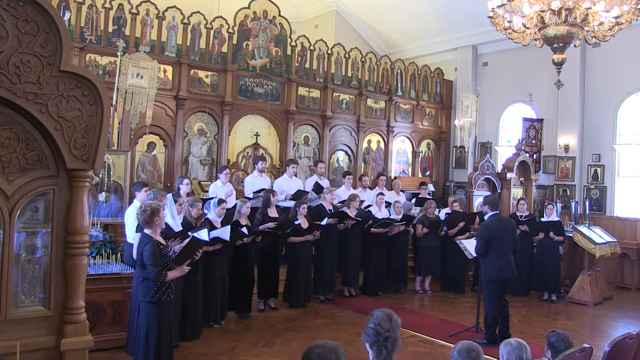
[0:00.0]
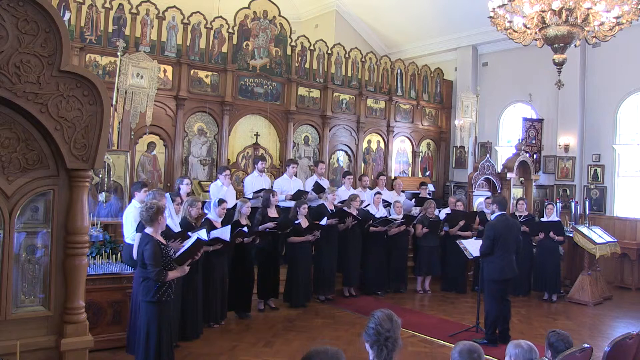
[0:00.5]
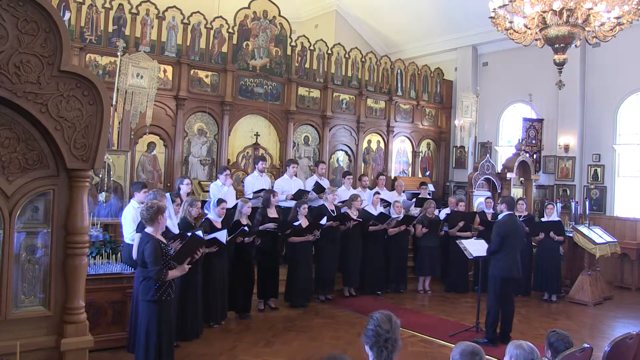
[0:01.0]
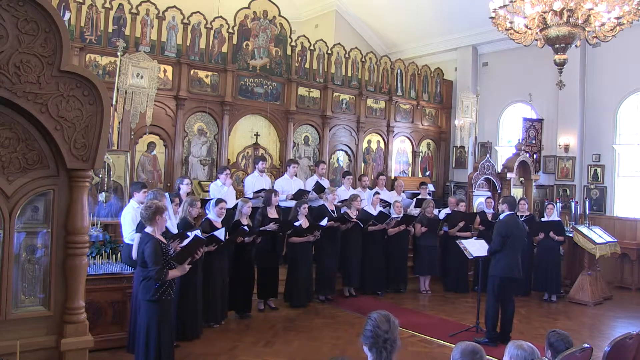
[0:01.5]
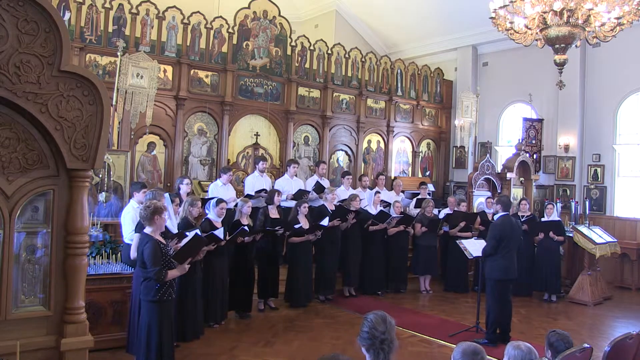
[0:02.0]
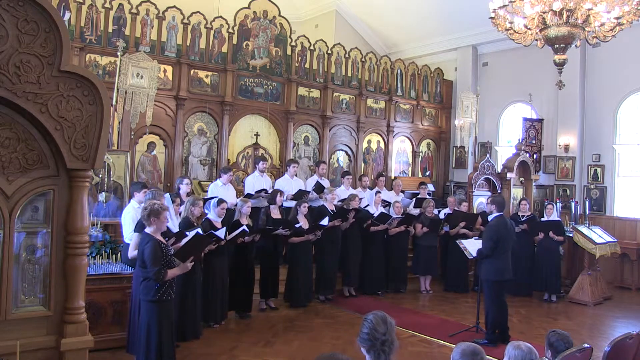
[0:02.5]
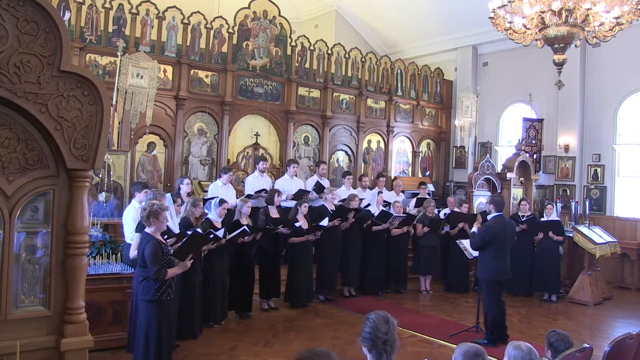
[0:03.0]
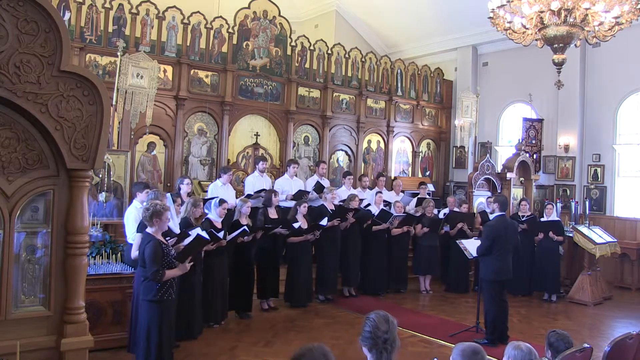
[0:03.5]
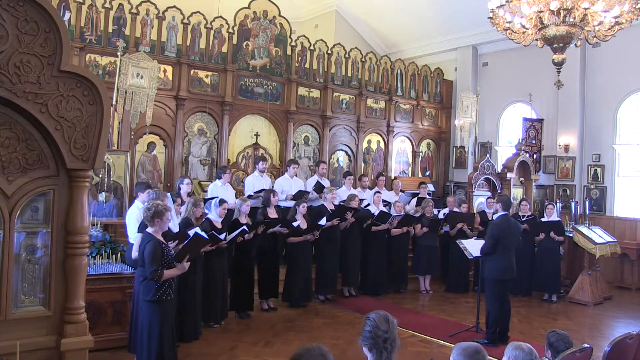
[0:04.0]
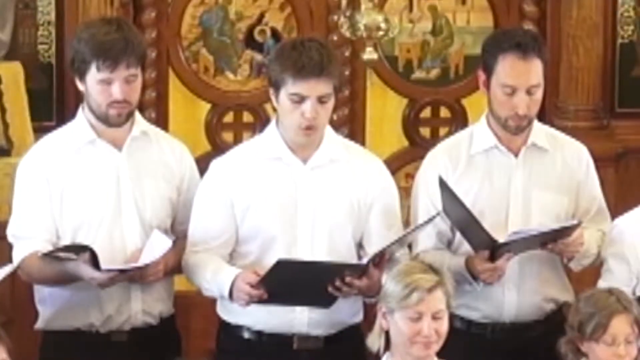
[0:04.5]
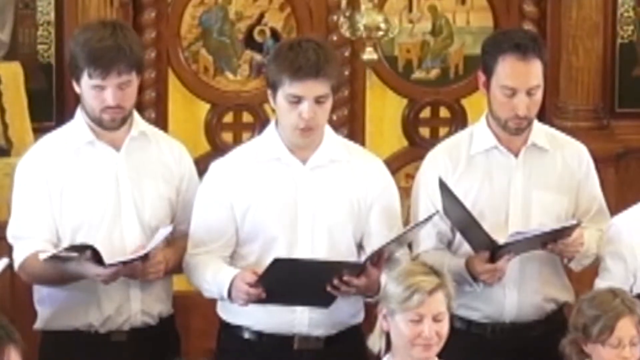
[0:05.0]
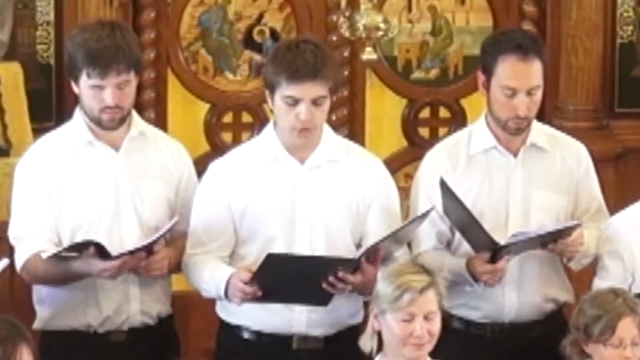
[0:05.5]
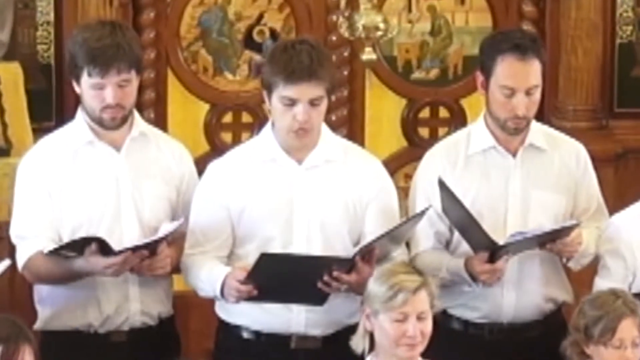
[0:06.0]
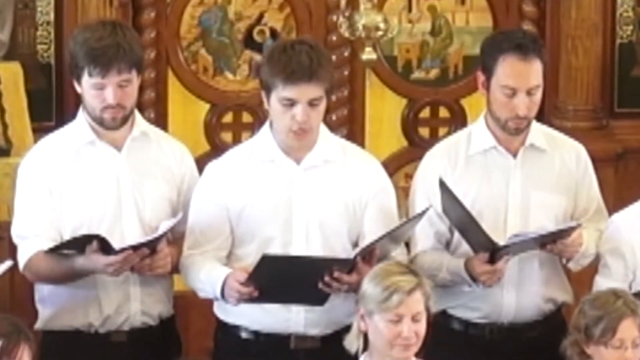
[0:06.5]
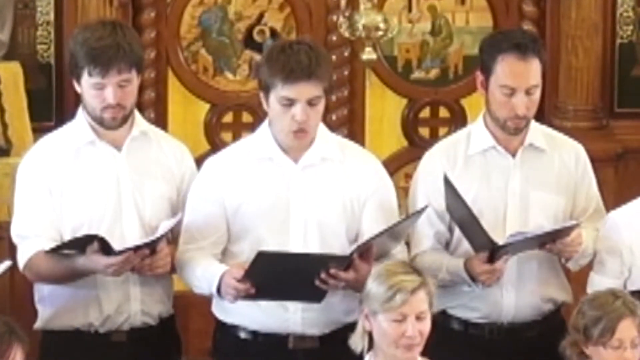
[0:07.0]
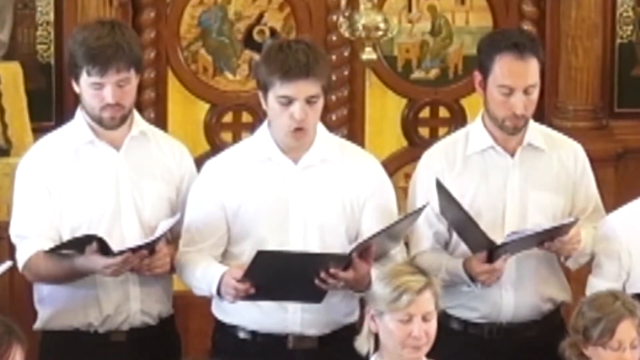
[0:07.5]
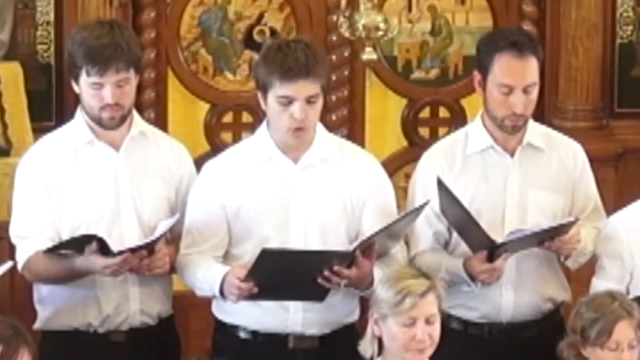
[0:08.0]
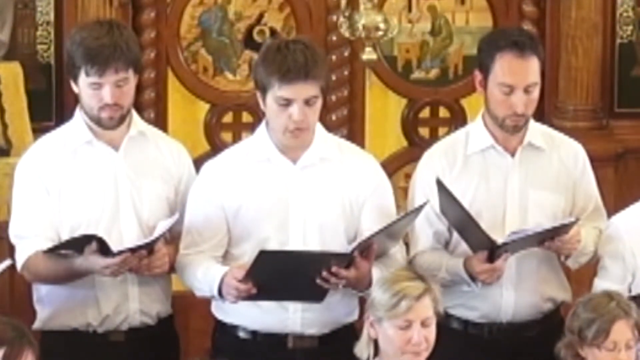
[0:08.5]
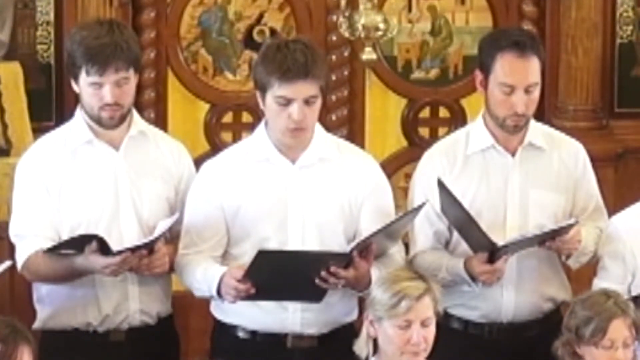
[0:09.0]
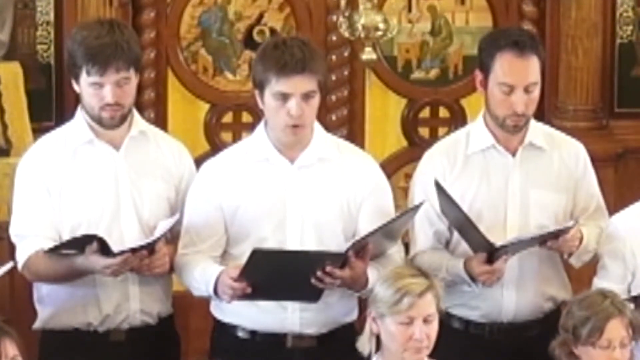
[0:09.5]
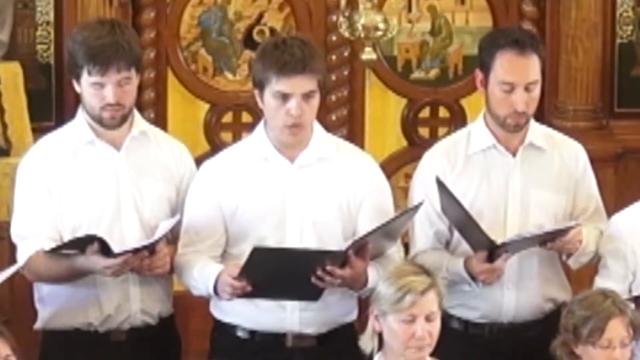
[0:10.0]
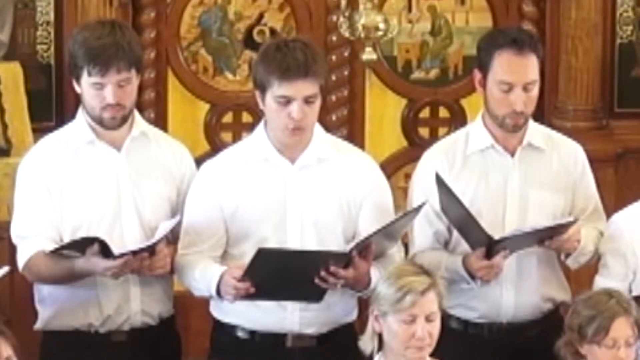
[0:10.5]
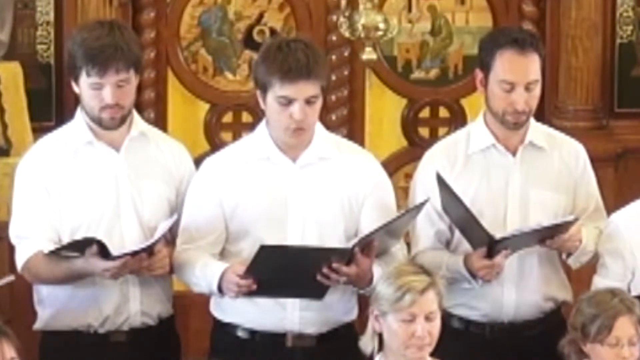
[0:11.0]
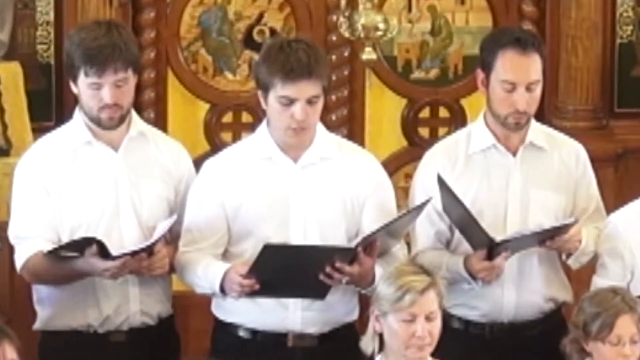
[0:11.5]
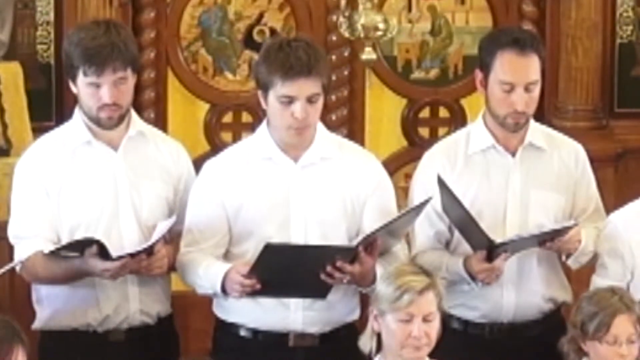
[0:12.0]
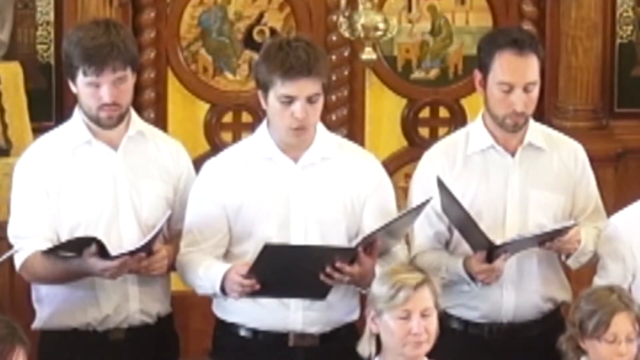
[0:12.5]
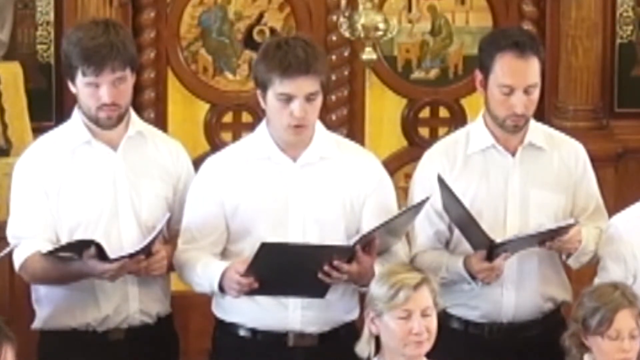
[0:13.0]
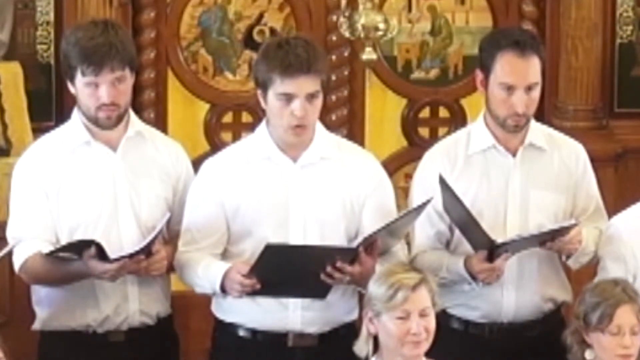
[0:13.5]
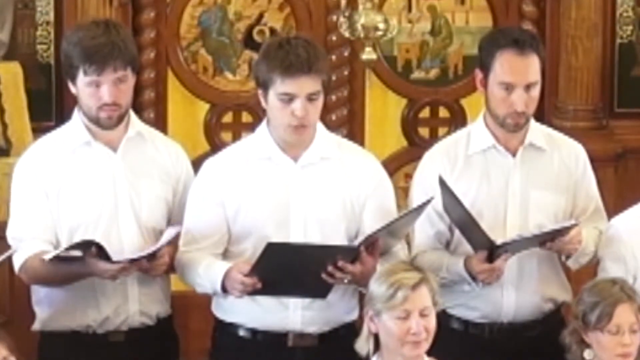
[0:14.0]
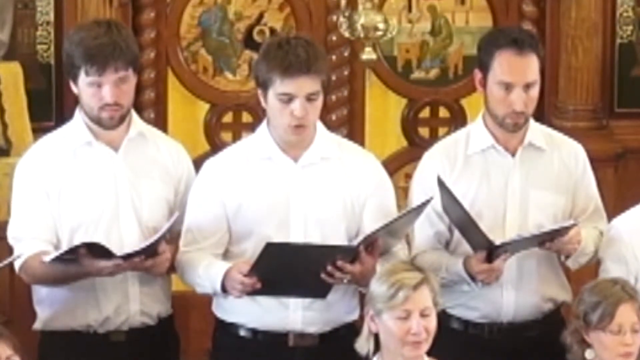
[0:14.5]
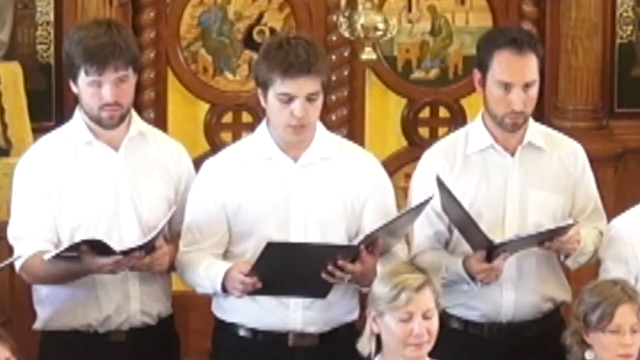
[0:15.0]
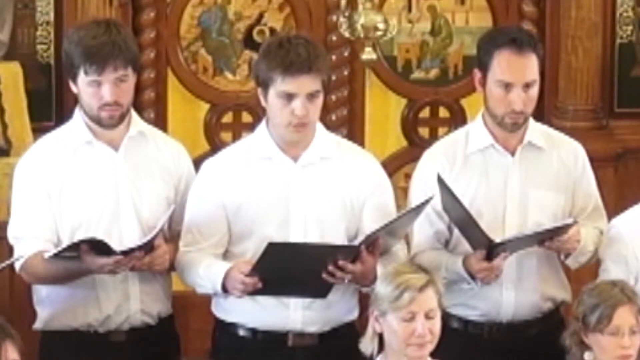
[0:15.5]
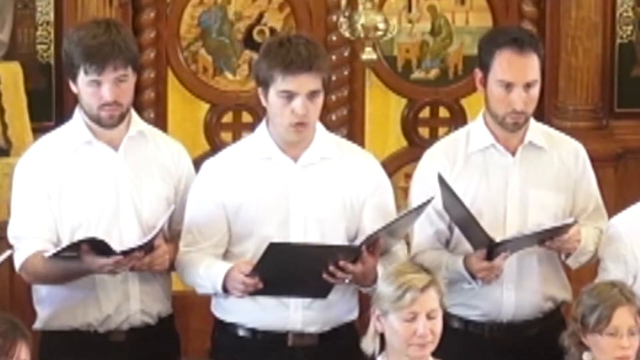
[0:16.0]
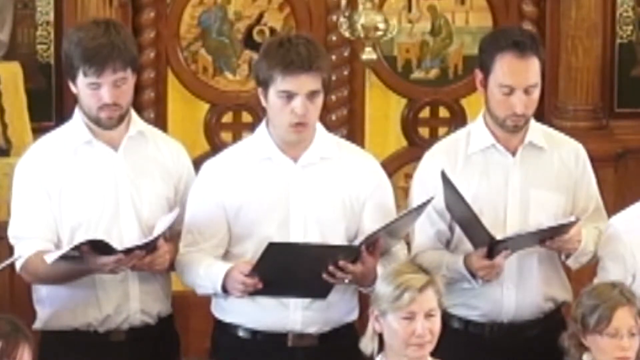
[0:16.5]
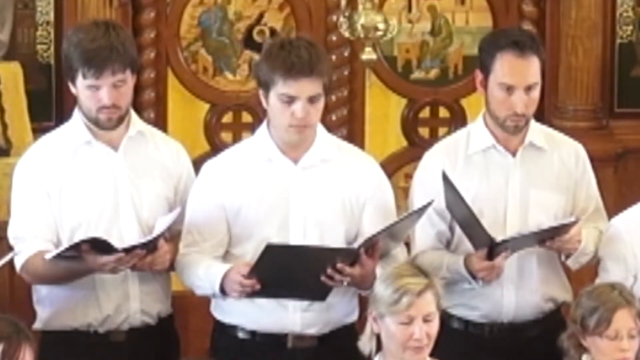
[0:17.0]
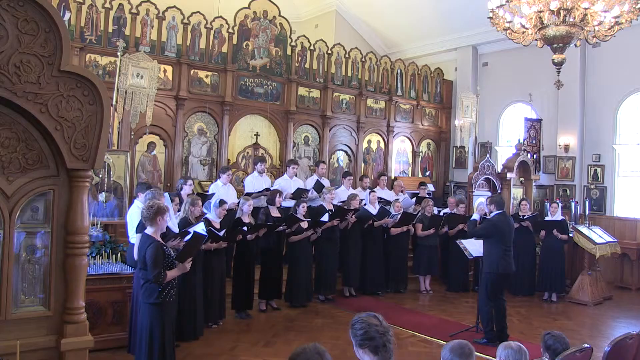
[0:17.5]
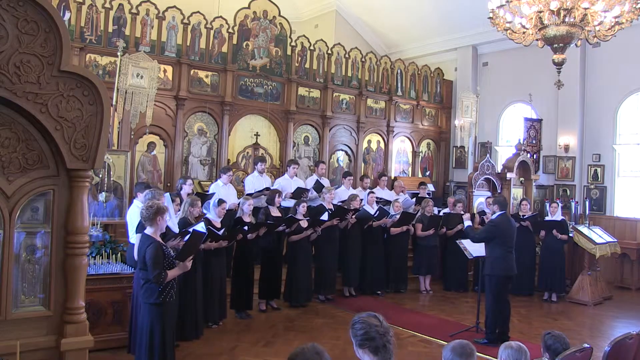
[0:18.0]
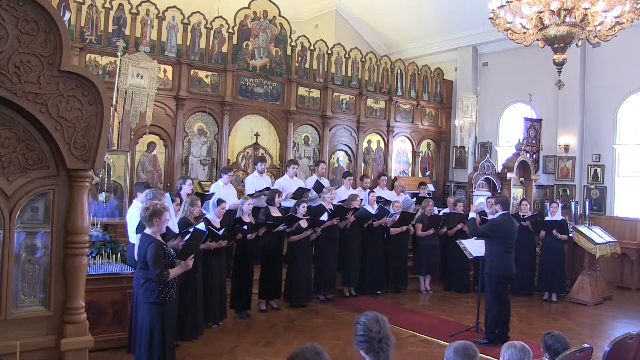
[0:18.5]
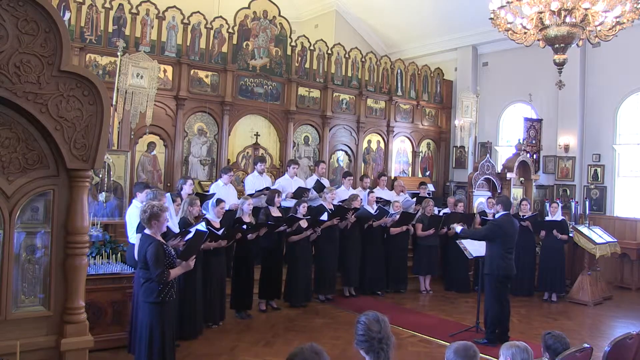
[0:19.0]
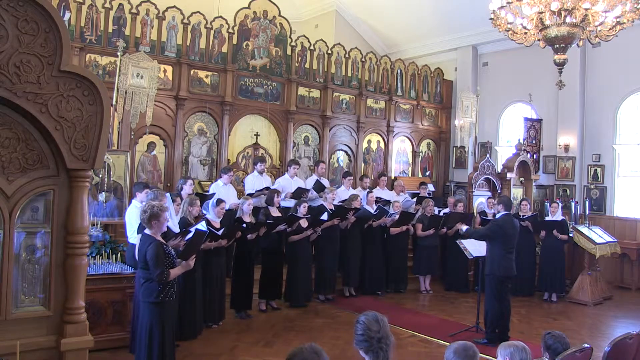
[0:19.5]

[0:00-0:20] A large choir is singing, apparently inside a church. The scene changes to a view of three men singing. All three hold books or pamphlets in their hands and look down as they sing; the man in the middle is singing while the two men on the sides wait. The scene then shifts to a zoomed-out view of the choir inside the church, with the conductor on the right side. All the men wear white shirts and black pants, and the women in the choir are all dressed in black. A hanging chandelier is in the top right corner. Behind the choir there are wooden church decorations, and in the background there are pictures of saints, a cross, and what appears to be Jesus, apparently Christian or Catholic. In the bottom right the heads of people watching the choir perform are visible.